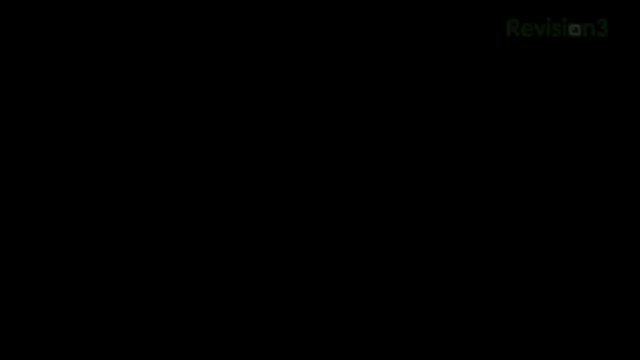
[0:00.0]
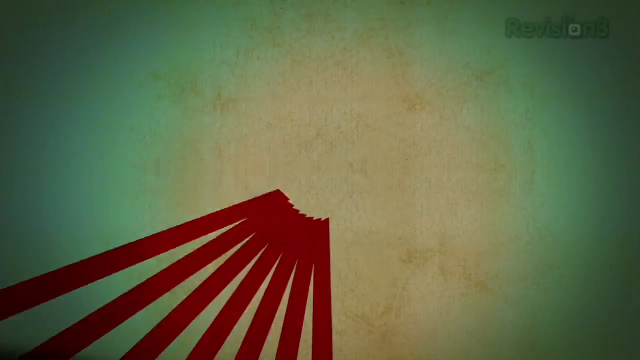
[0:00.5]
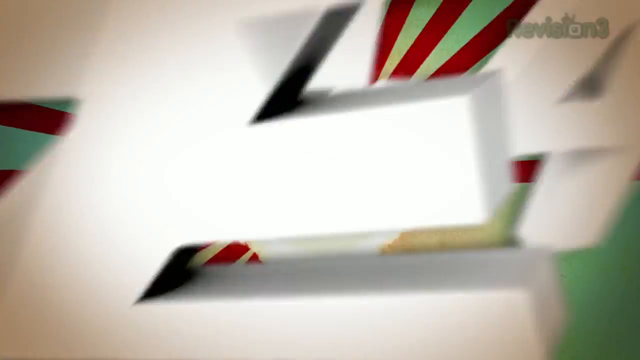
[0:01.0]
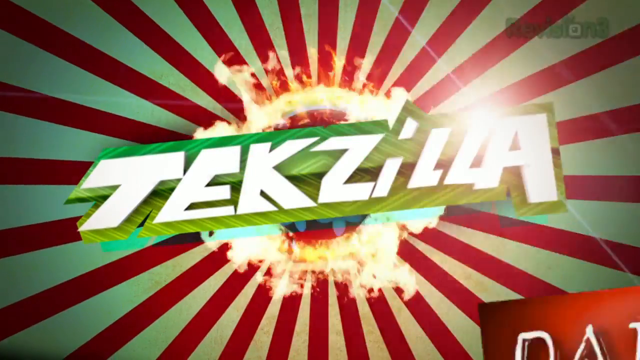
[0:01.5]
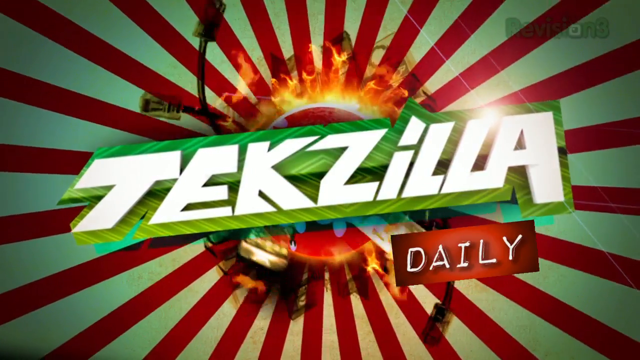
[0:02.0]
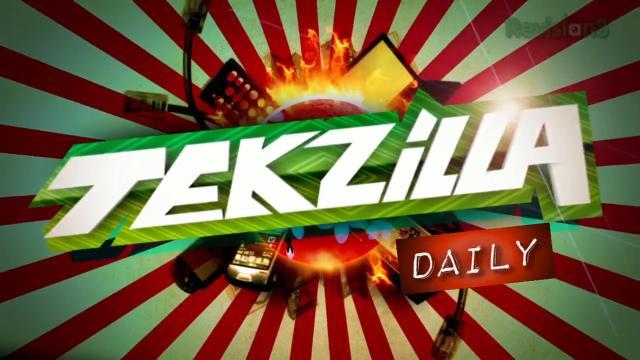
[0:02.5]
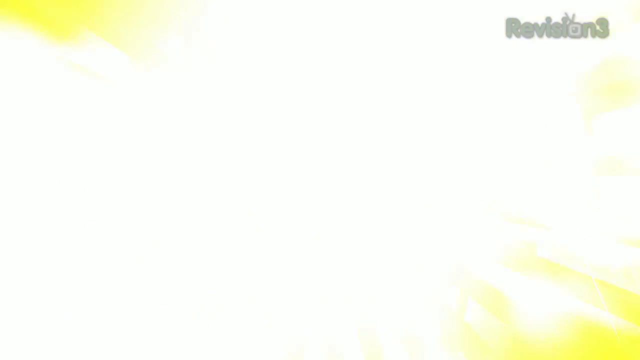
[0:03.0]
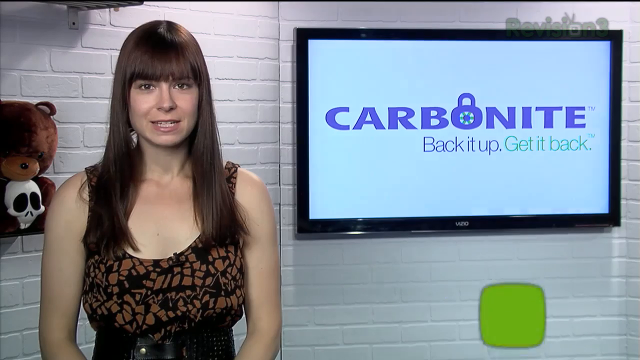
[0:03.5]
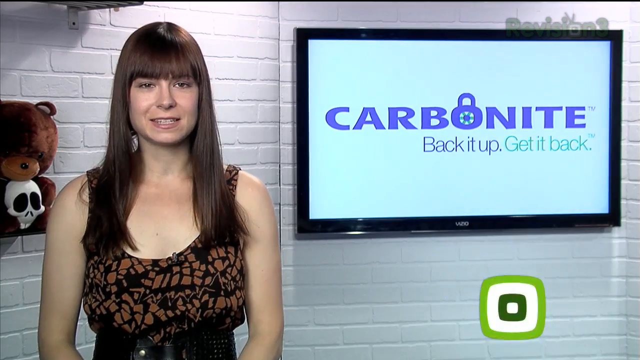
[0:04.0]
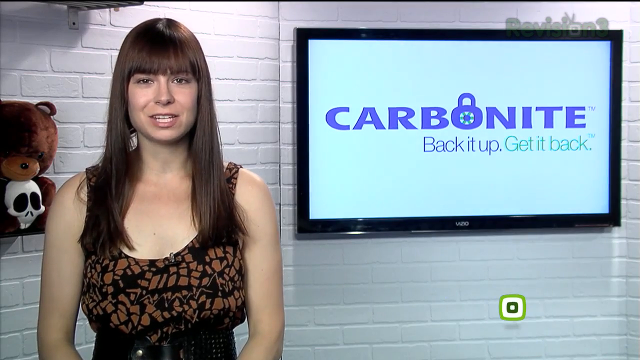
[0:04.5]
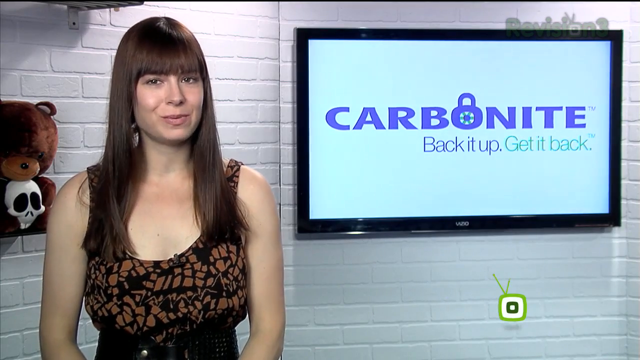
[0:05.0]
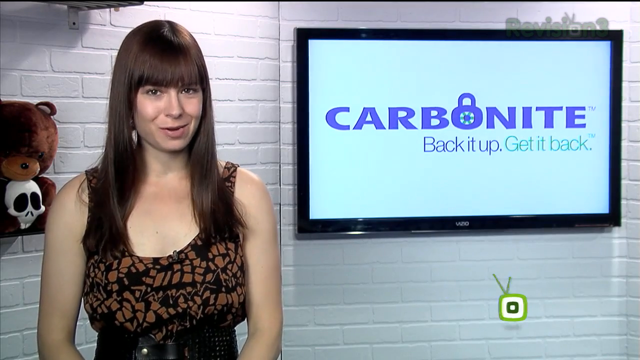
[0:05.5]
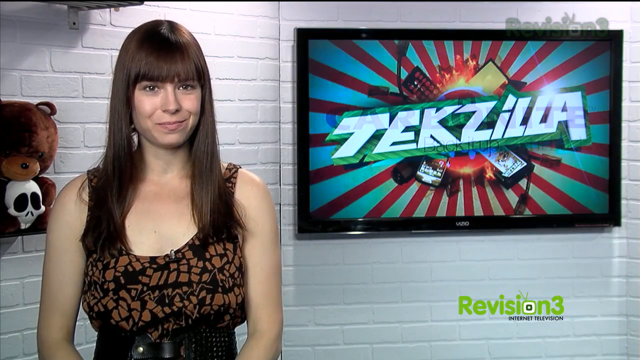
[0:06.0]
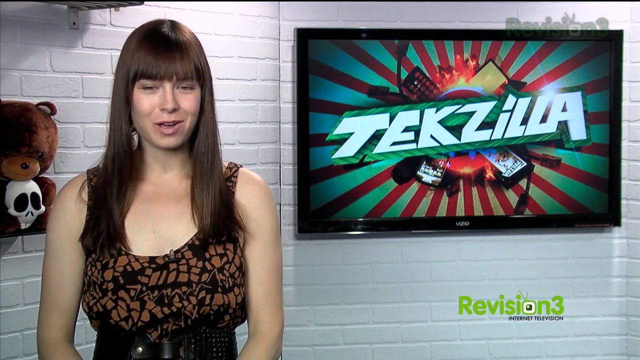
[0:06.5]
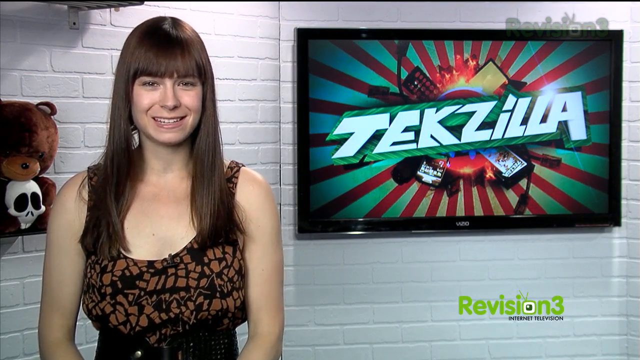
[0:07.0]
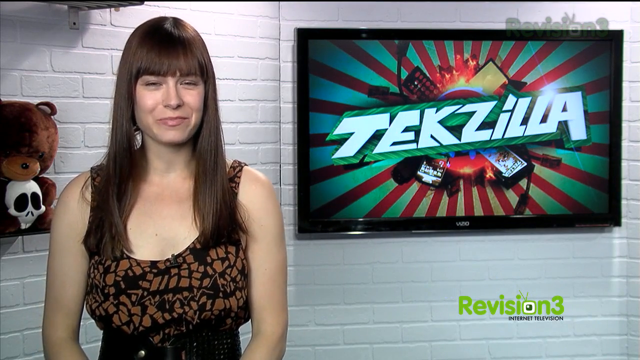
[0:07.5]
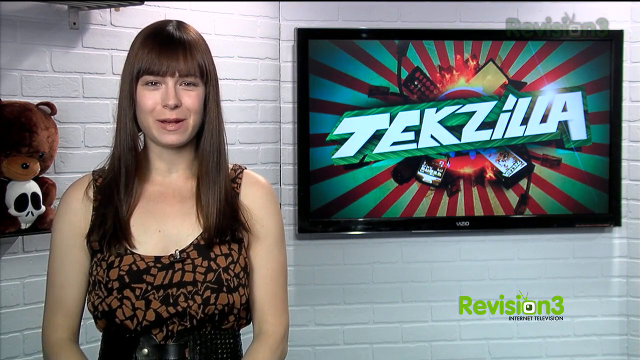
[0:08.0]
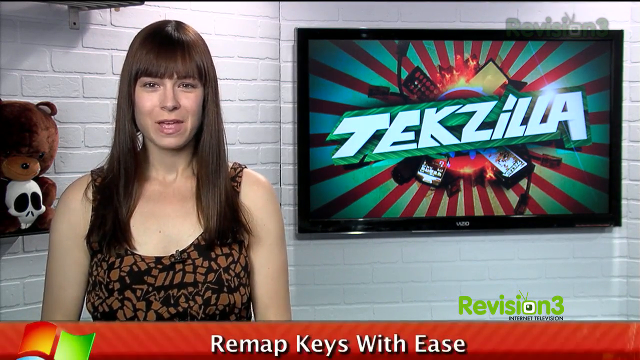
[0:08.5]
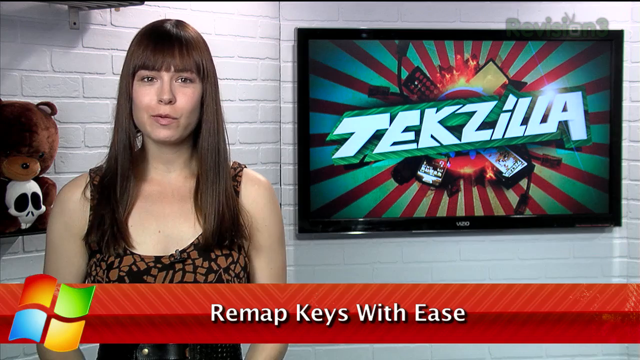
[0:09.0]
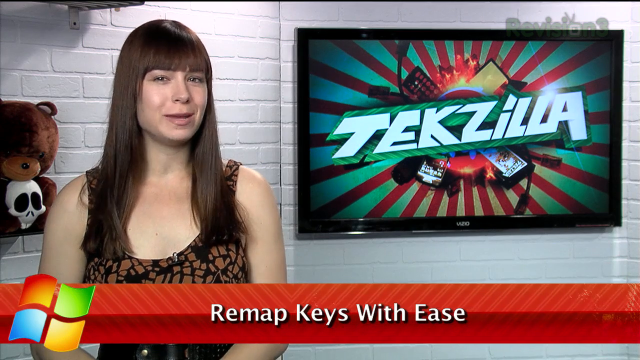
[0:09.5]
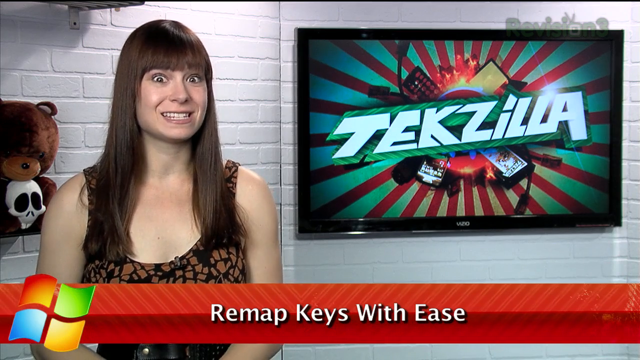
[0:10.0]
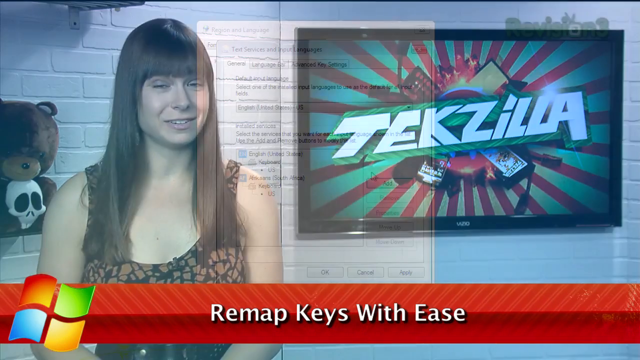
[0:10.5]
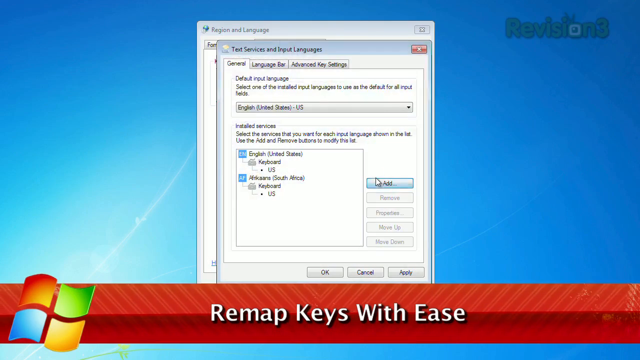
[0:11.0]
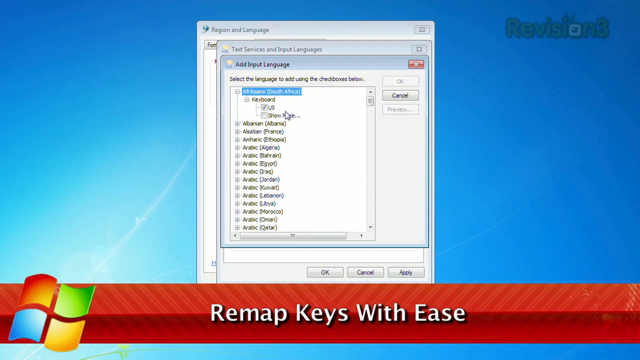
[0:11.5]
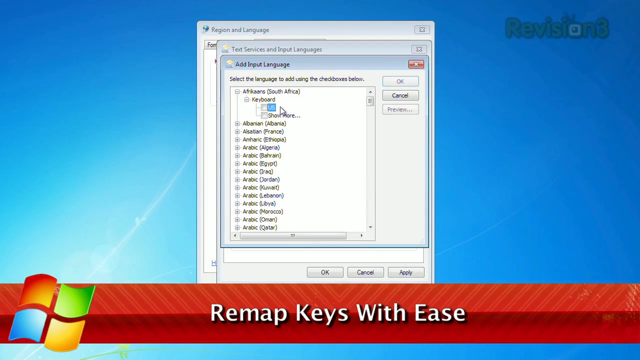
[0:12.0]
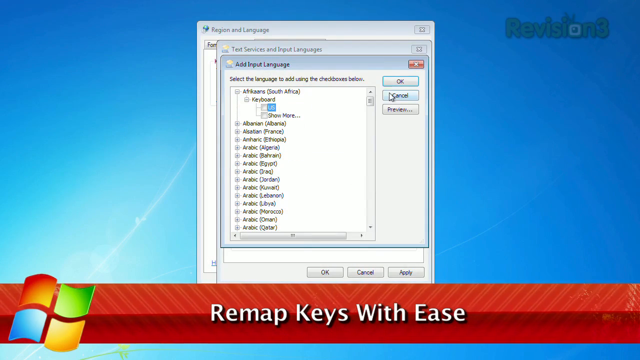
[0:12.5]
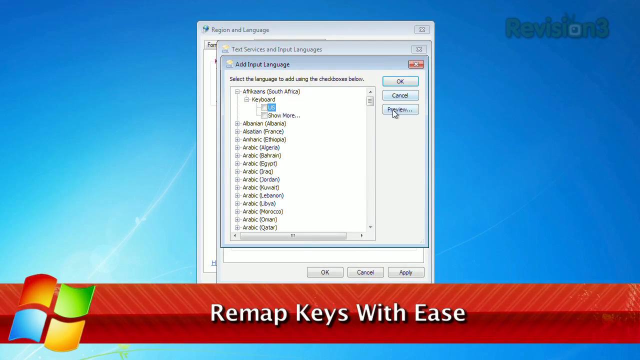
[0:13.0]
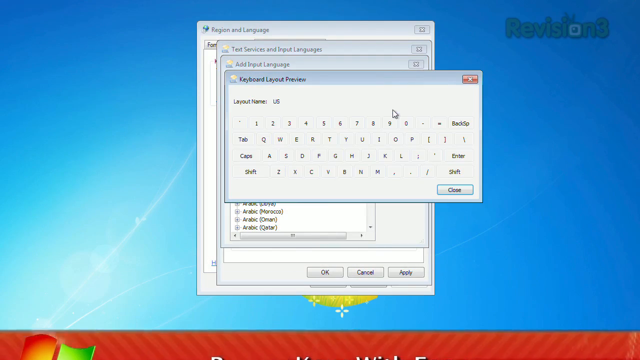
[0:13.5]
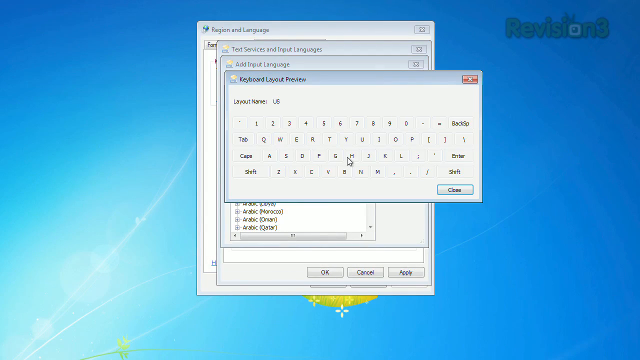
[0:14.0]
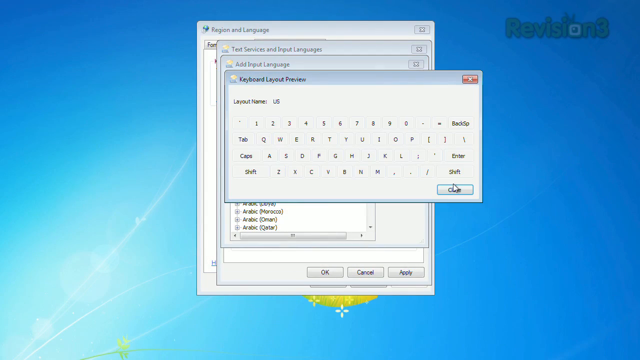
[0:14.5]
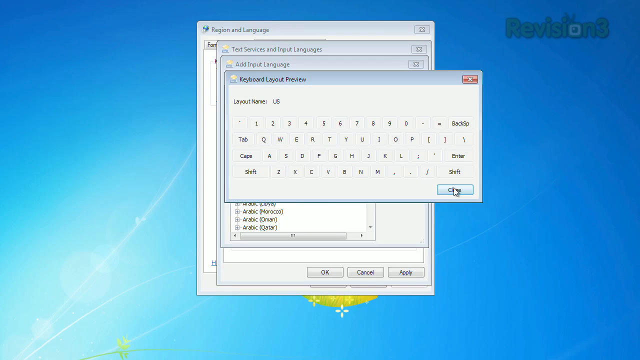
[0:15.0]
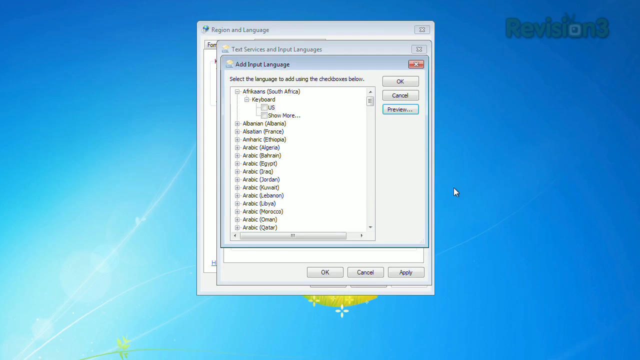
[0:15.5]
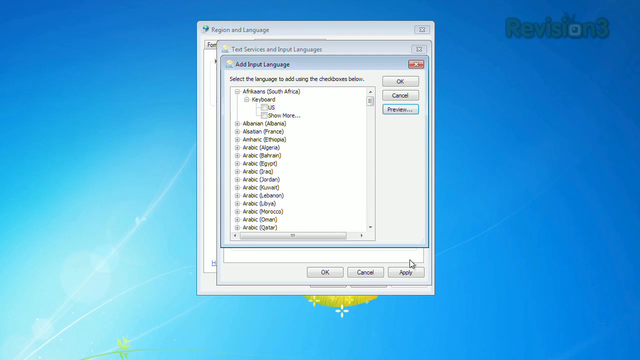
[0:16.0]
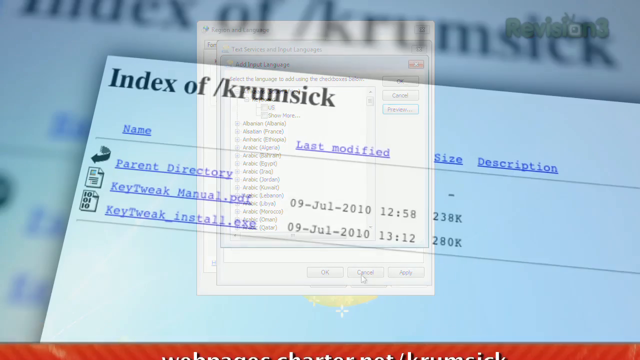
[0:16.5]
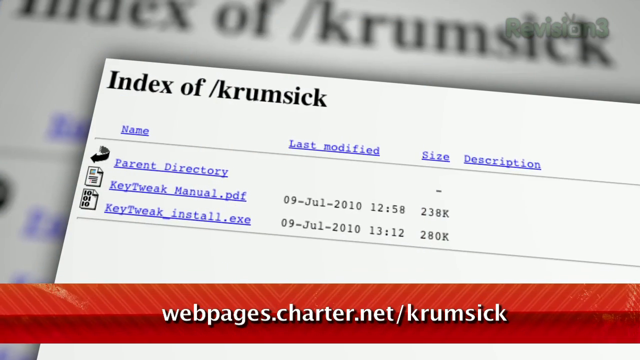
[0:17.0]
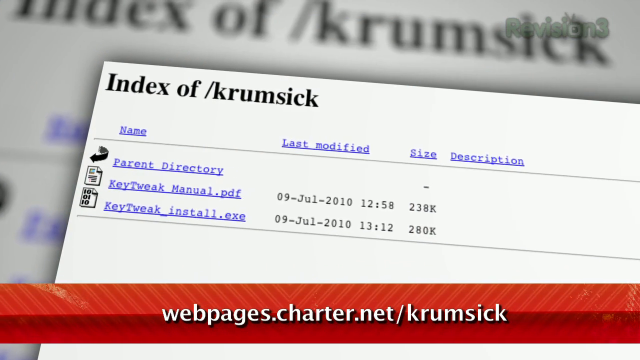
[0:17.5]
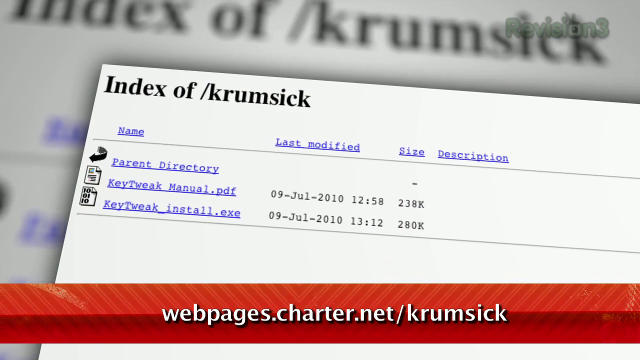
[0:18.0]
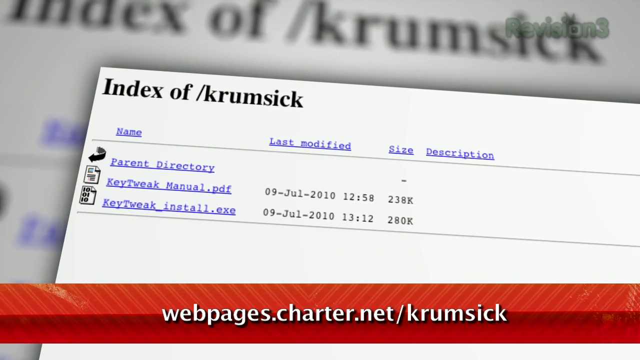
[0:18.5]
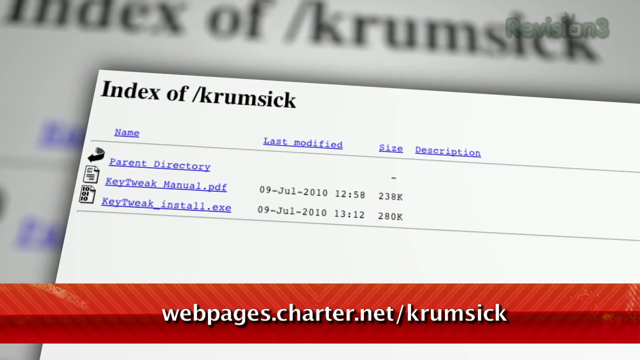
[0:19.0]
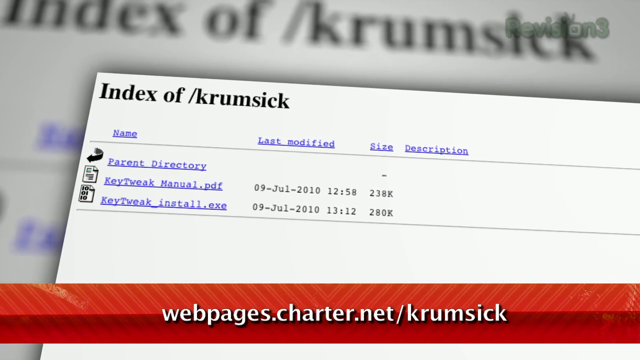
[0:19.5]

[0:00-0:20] The video opens on a light green background with red stripes shooting out from every angle. In the center of the screen is a burning flame circle, and across it is a green rectangle with white letters spelling "TEKZILLA". Below that is a red rectangle with white lettering reading "DAILY". The video then transitions to a female in her late 20s on the left side of the screen. She has long, dark, straight hair, dark brown eyes and a thin nose, and wears a black dress with brown rectangular shapes on the top. Behind her is a white brick wall, with white lighting in the background. Behind her right shoulder is a brown stuffed teddy bear approximately one foot in height, with a white skull figure on its chest and abdomen that has large black eyes and a small black nose. Behind her left shoulder, hanging on the white brick wall, is a television of unknown brand with a two-inch diameter black edging; the TV is approximately 60 inches. On the television screen, written in purple, is the word "carbonite", with the O drawn as a padlock. Under it, in purple, is "back it up", and next to that, in light blue, are the words "get it back". The Tekzilla logo then appears on the television behind the female speaker as she smiles and continues to speak. A Microsoft logo appears in the bottom left-hand corner of the screen, and a red rectangle appears across the bottom 20% of the screen, stretching from left to right, with the words "REMAP KEYS WITH EASE". The video then transitions to an image of a computer screen with a keyboard.